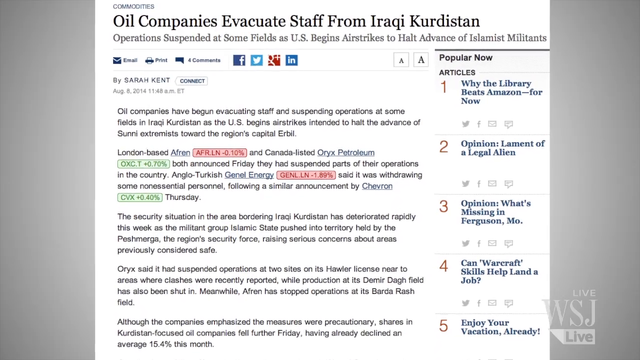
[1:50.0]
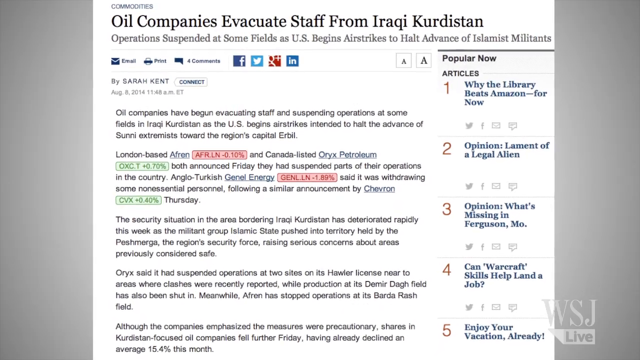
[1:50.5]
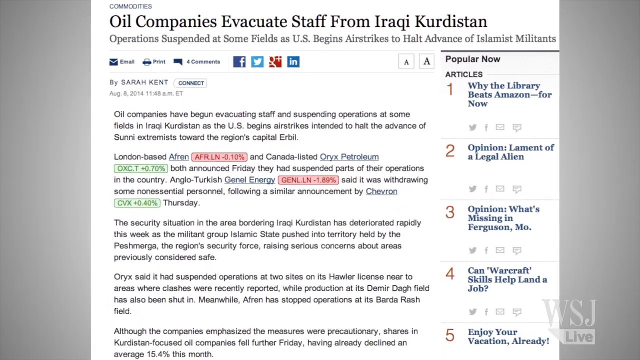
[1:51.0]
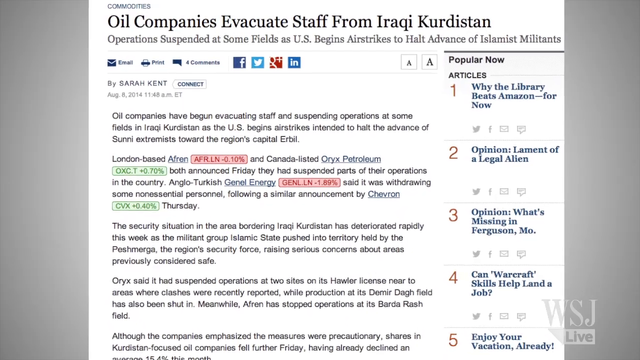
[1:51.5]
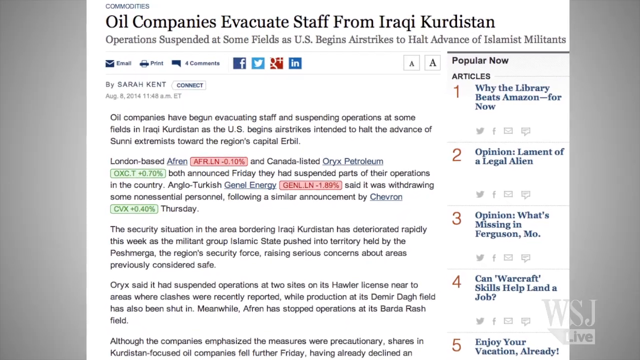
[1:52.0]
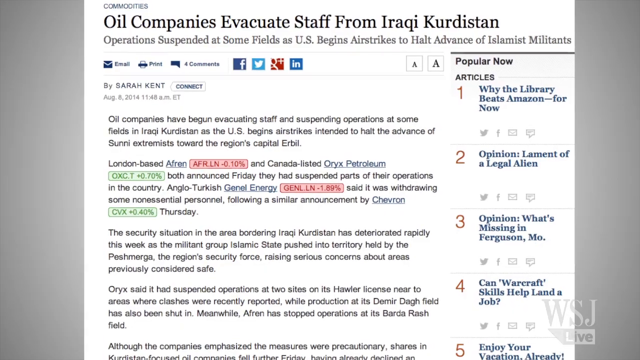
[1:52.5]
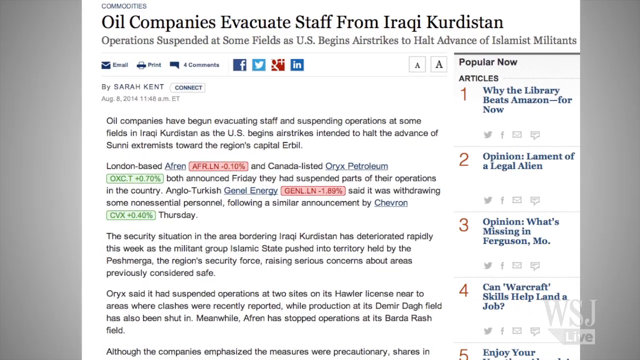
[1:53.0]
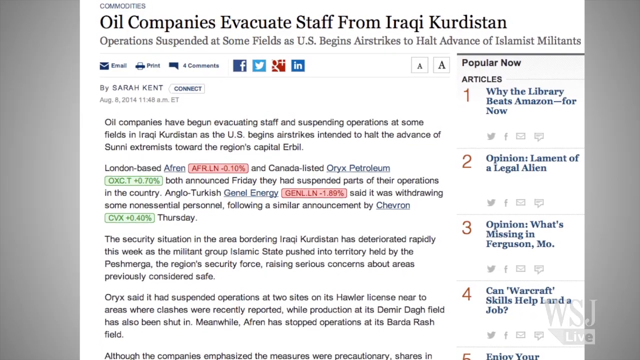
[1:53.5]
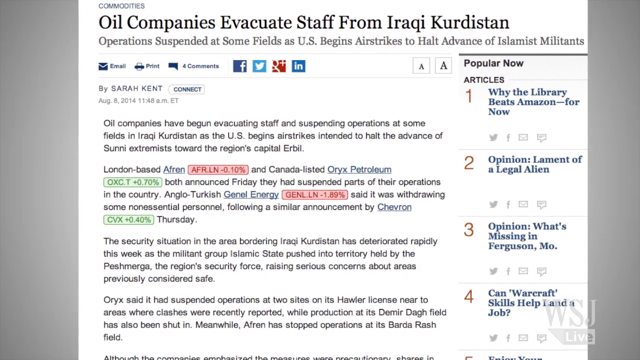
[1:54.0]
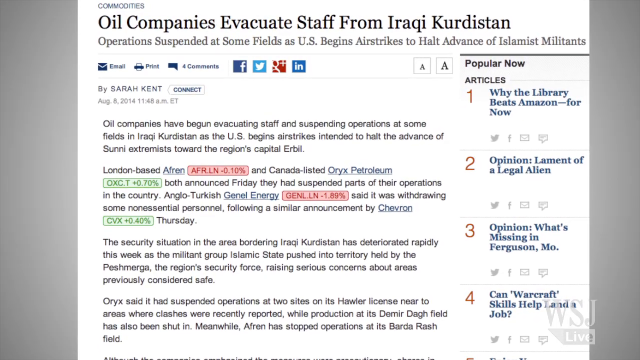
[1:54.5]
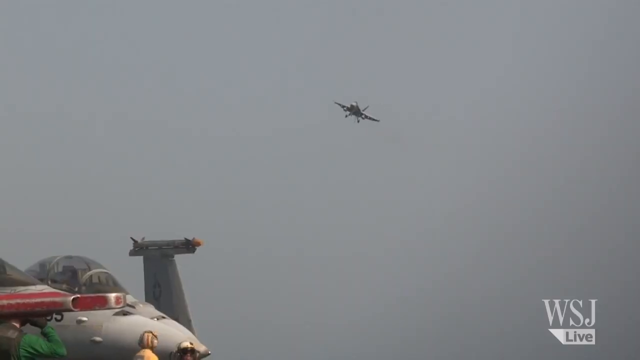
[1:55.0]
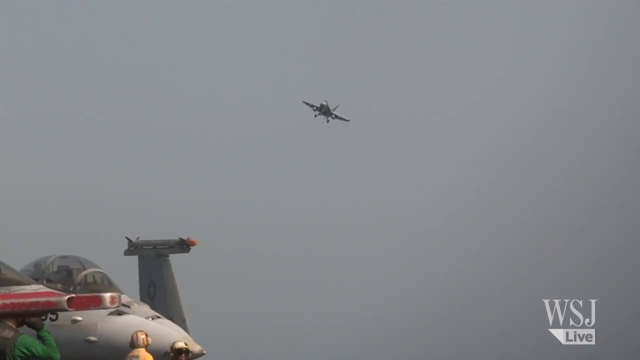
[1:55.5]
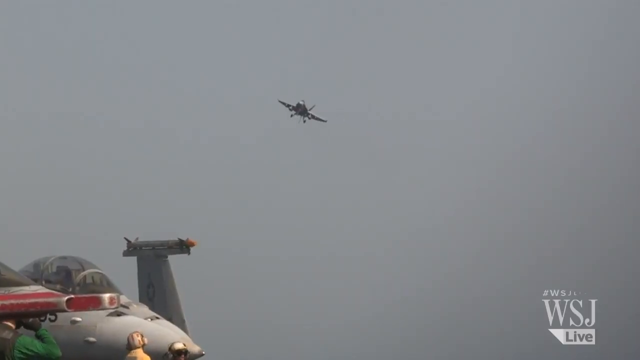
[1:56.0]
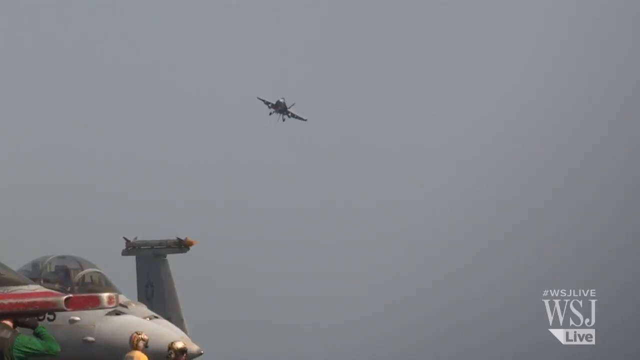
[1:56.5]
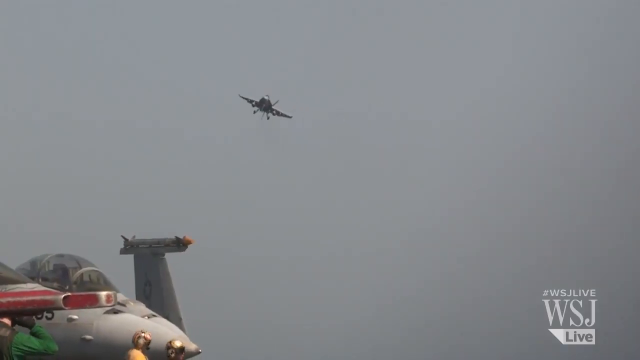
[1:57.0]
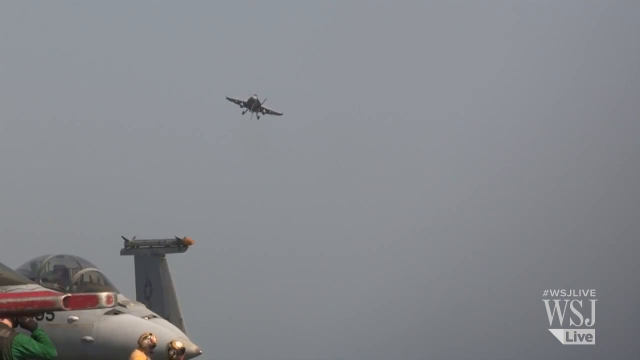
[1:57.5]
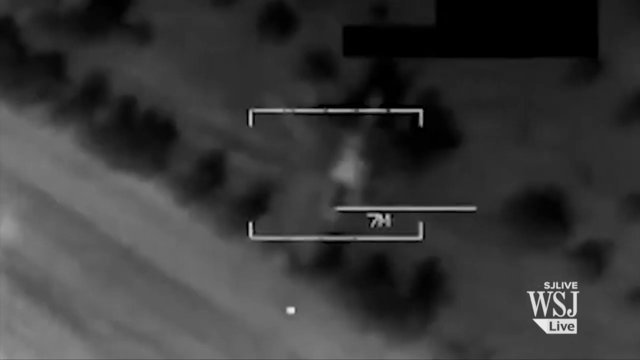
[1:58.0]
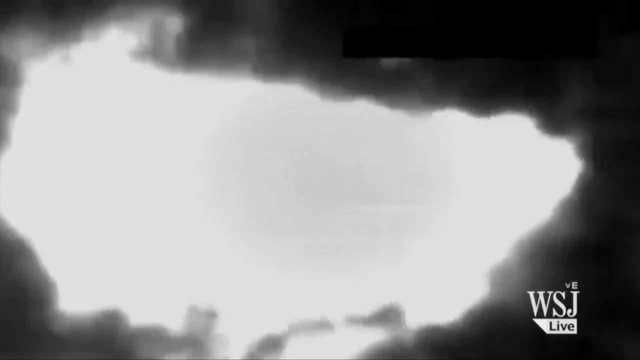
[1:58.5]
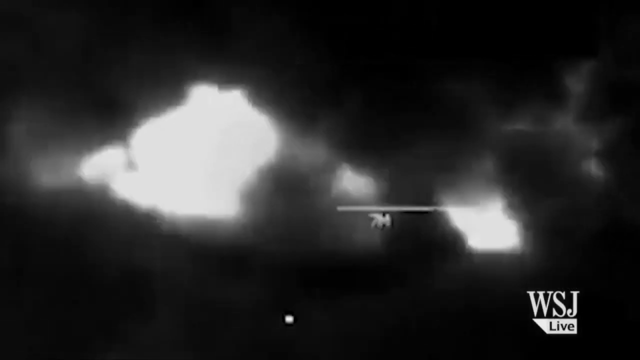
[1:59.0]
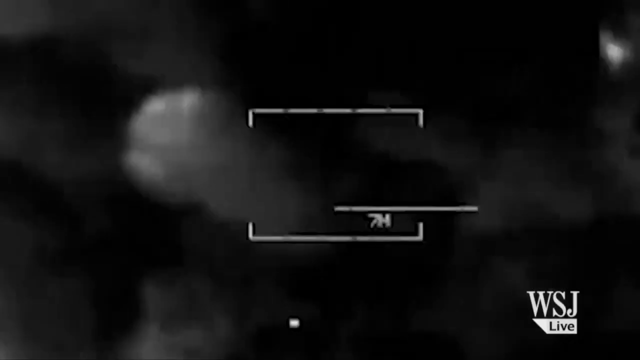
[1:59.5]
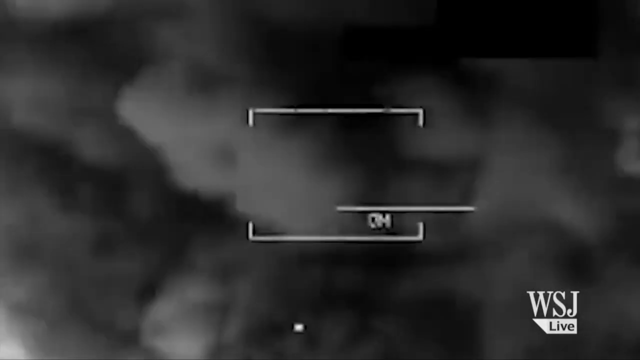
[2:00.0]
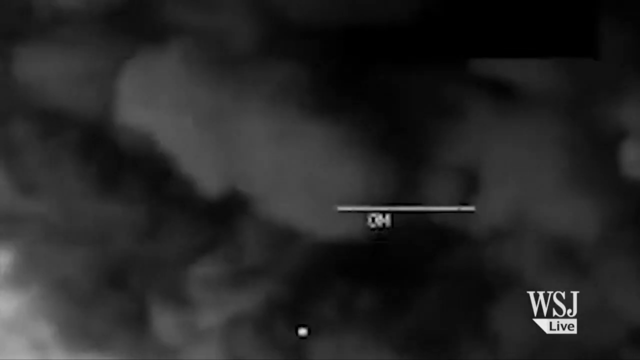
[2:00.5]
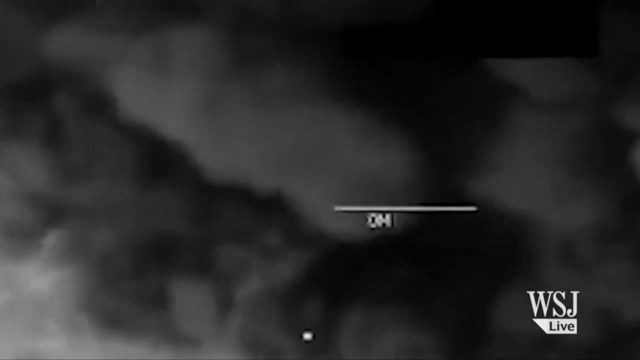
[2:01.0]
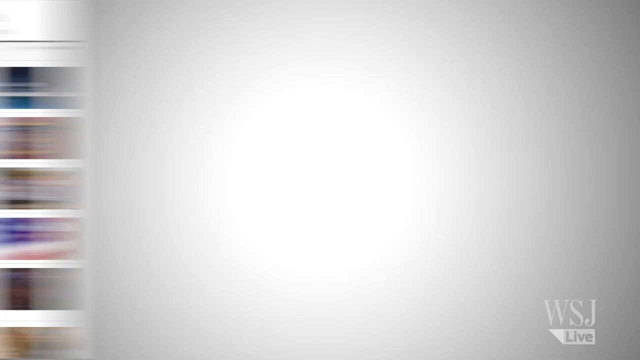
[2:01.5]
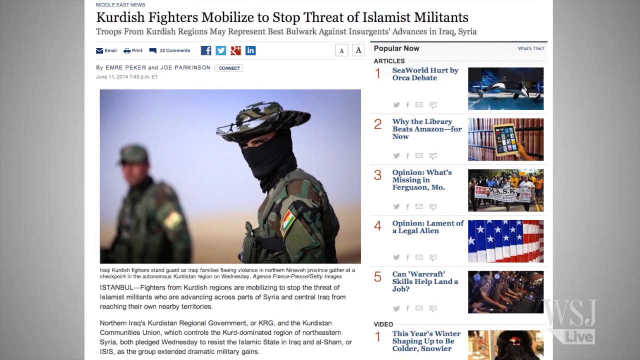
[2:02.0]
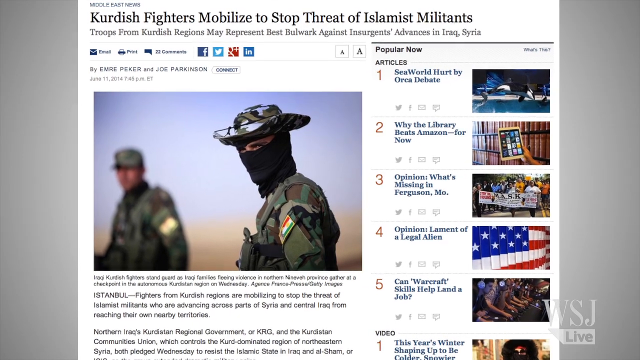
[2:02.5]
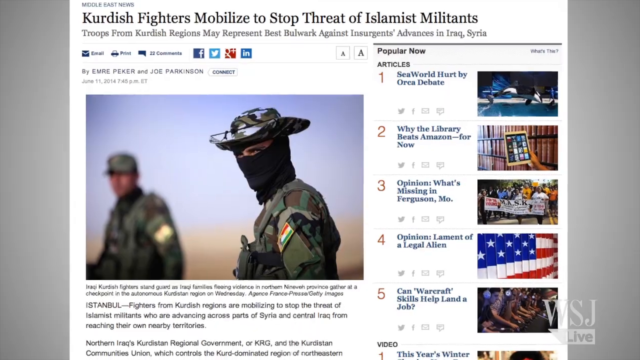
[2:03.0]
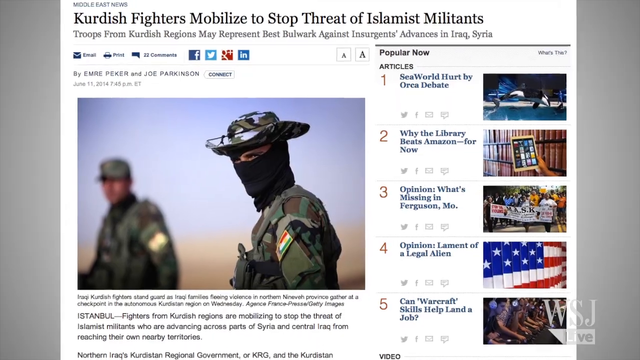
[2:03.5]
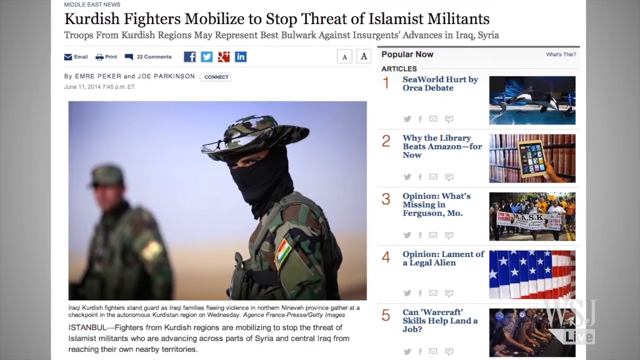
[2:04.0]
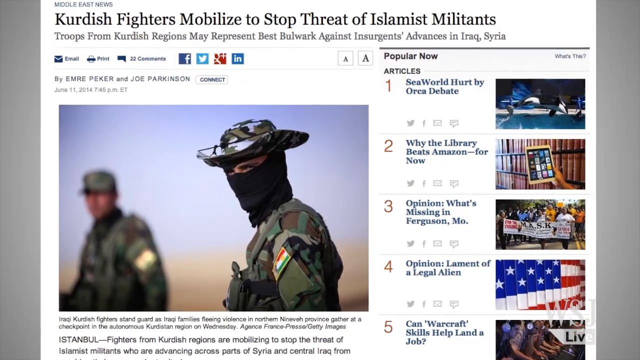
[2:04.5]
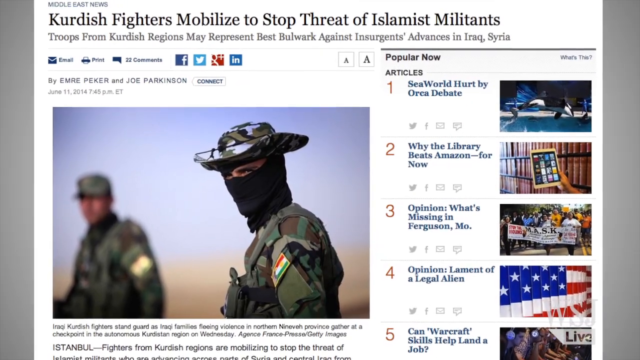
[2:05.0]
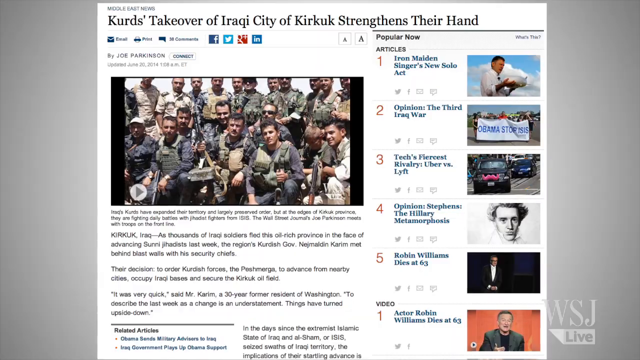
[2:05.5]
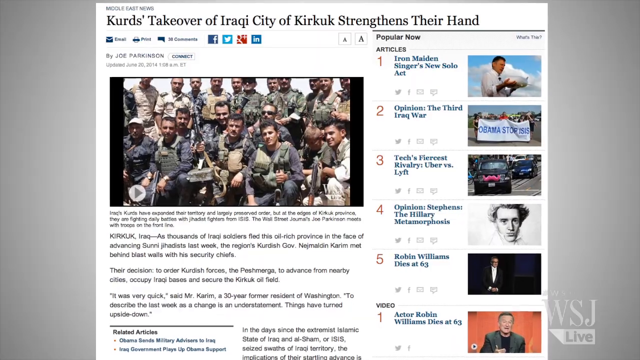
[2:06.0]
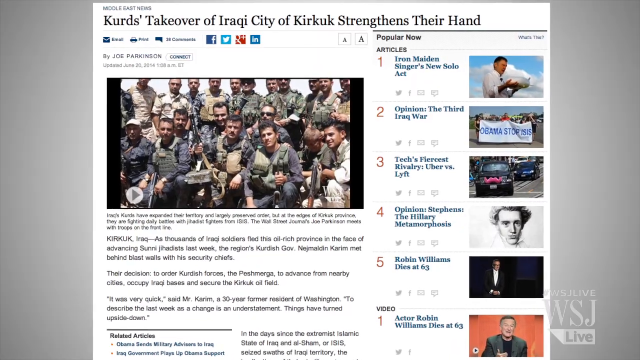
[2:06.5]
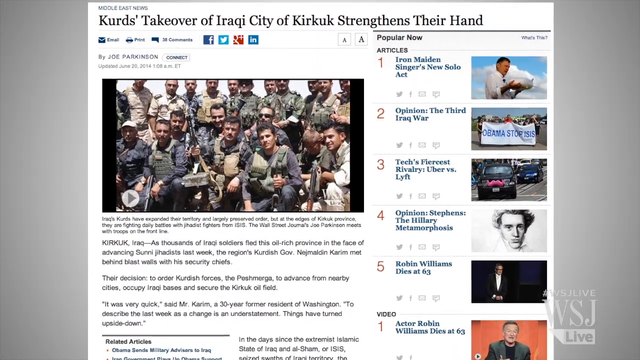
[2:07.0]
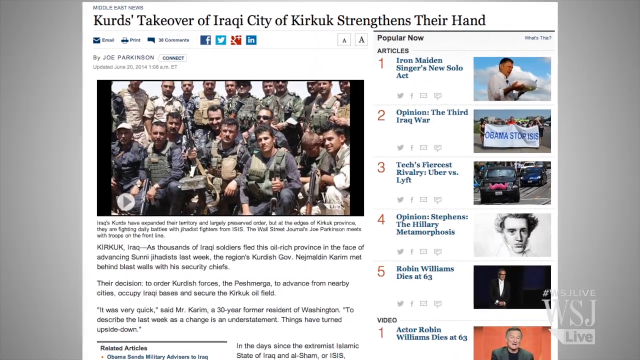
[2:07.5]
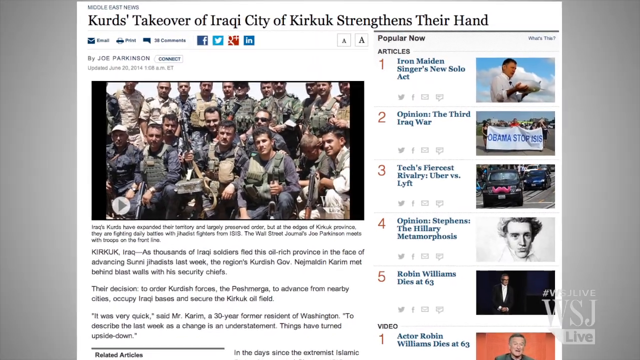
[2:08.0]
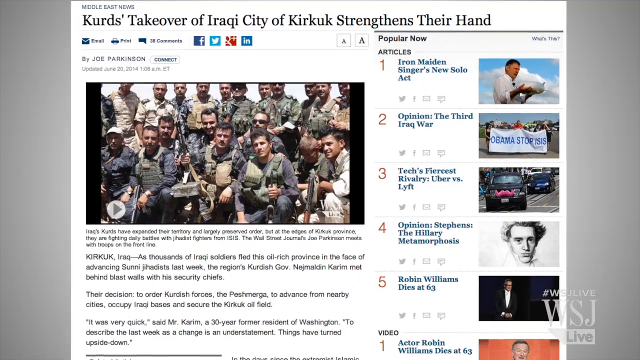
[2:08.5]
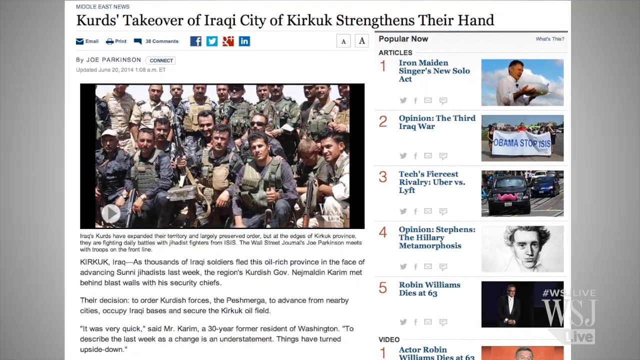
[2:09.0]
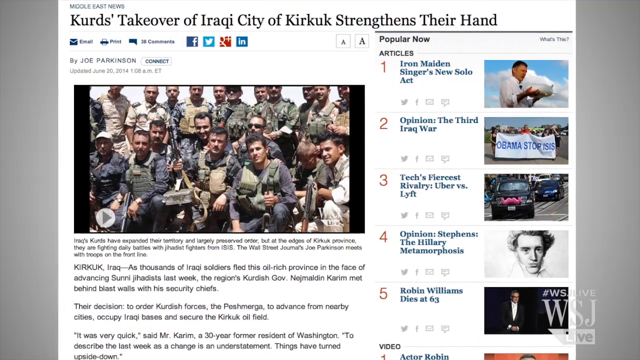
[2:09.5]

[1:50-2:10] Gray letterboxing frames the left and right sides, with a sheet of paper in the center. At the top, a title reads "oil companies evacuate staff from Iraqi Kurdistan", and below it text reads "operations suspended at some fields in the U.S. begins airstrikes to halt advance in Islamist militants". Below that are several paragraphs on the left and a "popular now" section on the right listing four articles. The video then shows a plane flying in the air, followed by a scene of a lot of smoke and destruction. Another article follows, reading "Kurdish fighters mobilized to stop threat of Islamist militants", with a picture below of a couple of men in camo, both facing generally left; the one on the right wears a ski mask. The camera zooms in toward the top of that article.